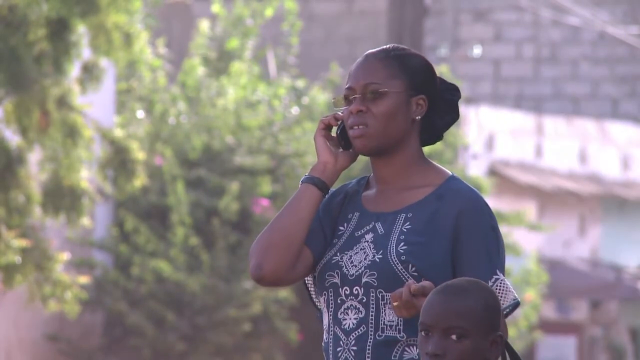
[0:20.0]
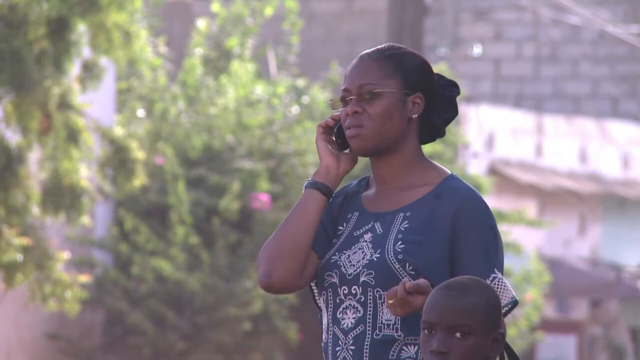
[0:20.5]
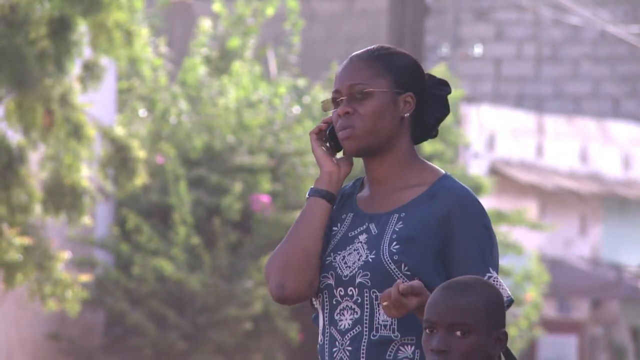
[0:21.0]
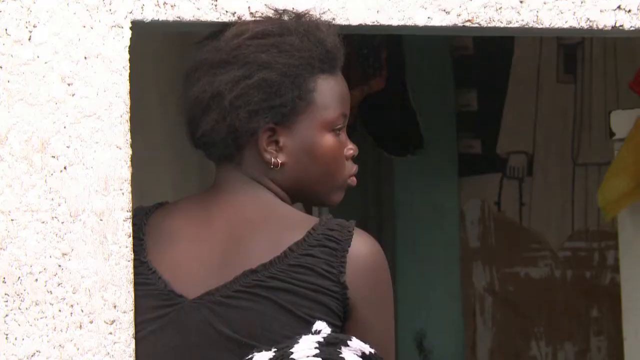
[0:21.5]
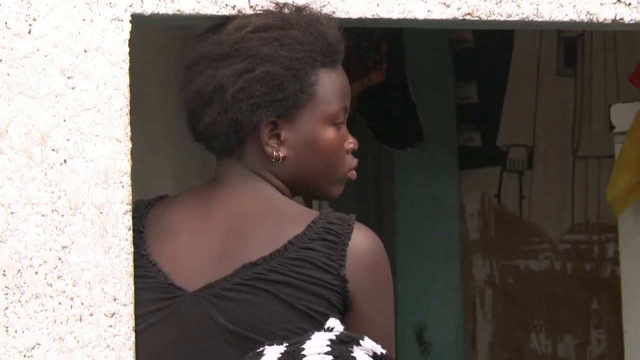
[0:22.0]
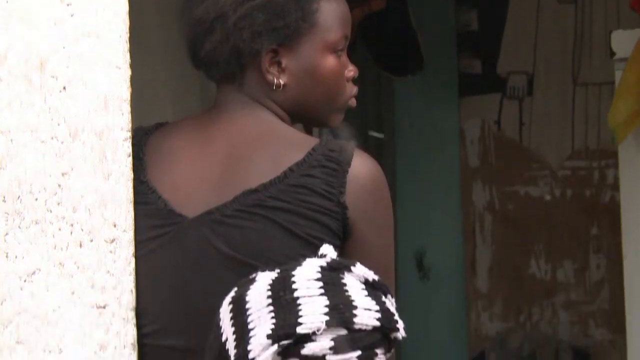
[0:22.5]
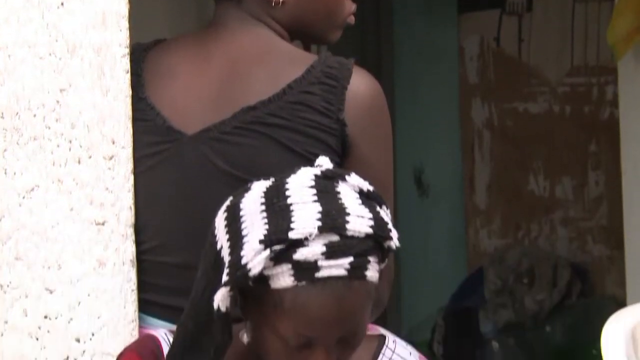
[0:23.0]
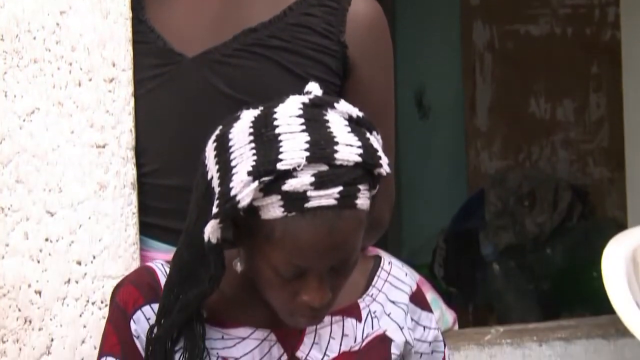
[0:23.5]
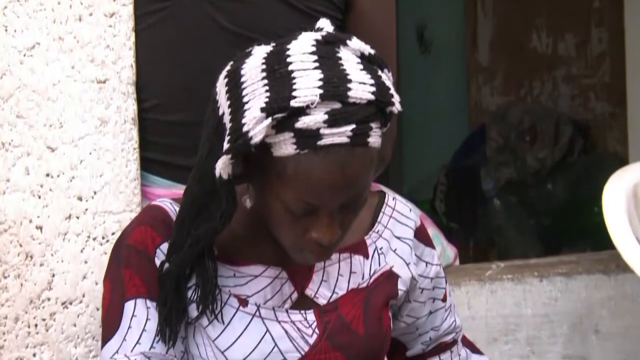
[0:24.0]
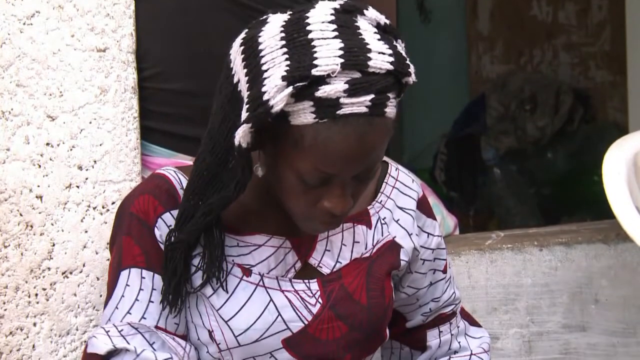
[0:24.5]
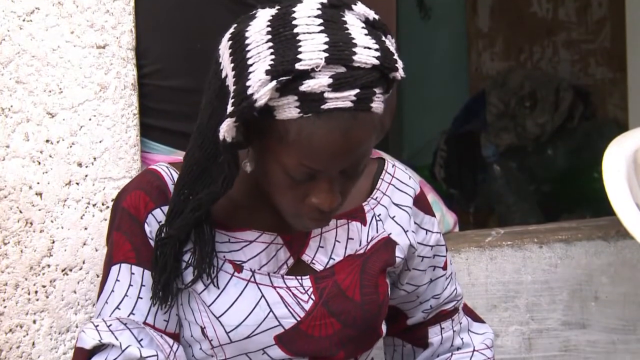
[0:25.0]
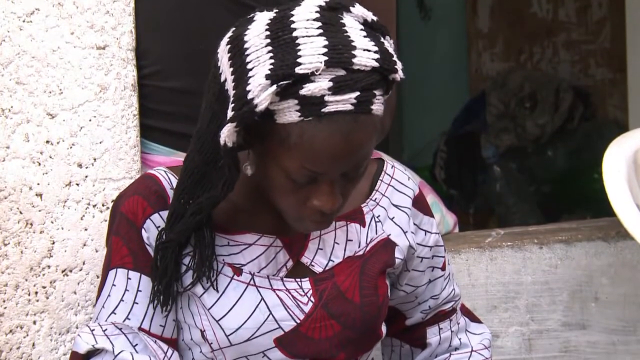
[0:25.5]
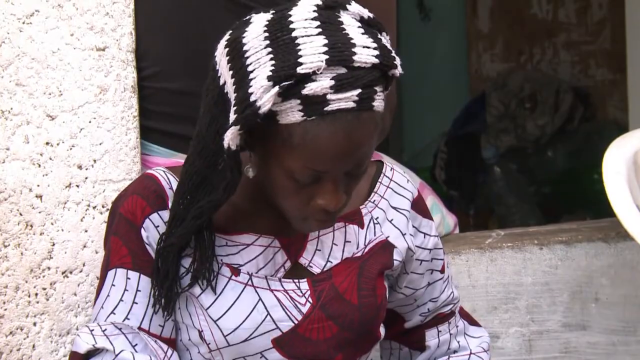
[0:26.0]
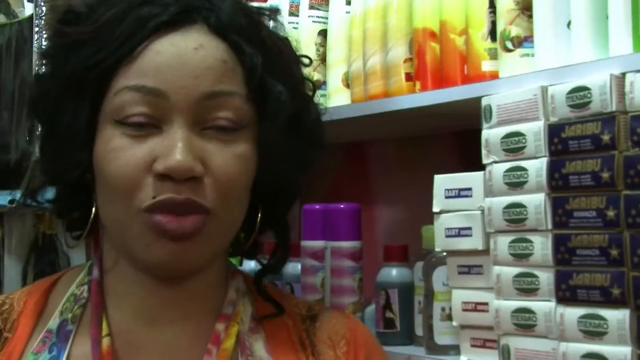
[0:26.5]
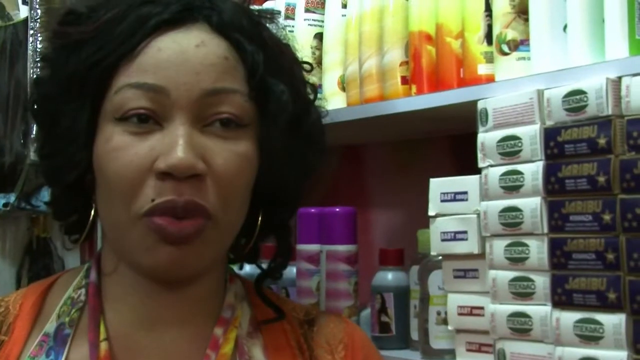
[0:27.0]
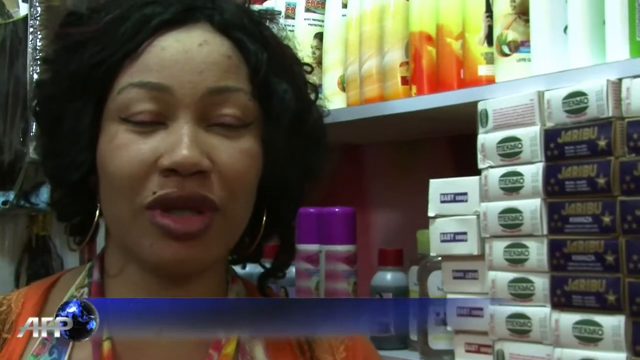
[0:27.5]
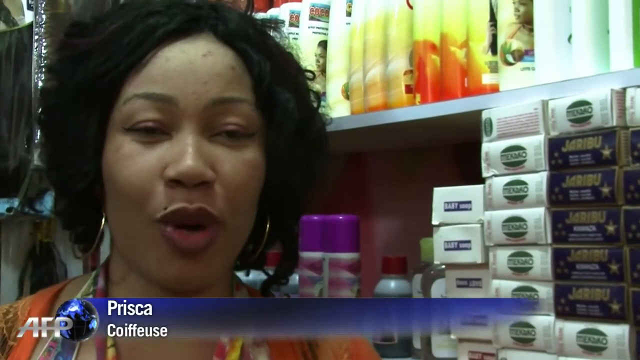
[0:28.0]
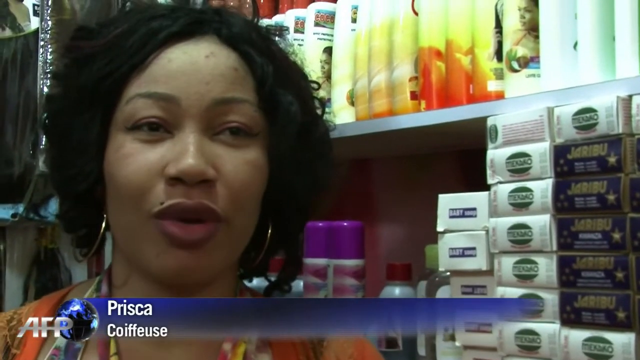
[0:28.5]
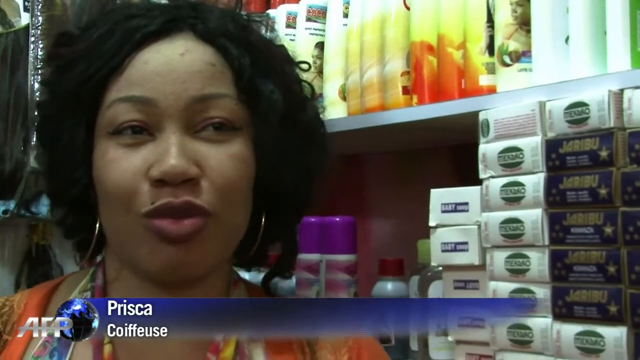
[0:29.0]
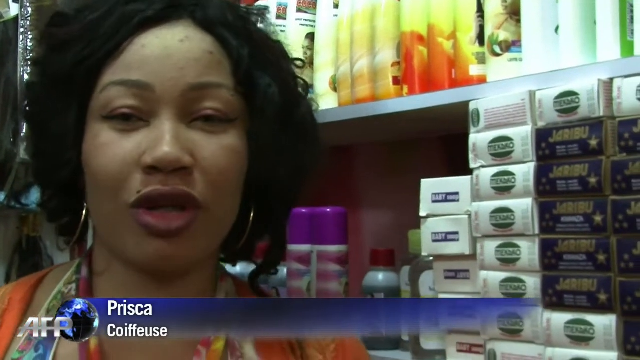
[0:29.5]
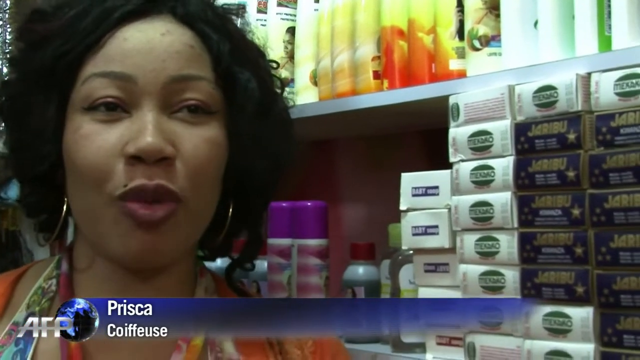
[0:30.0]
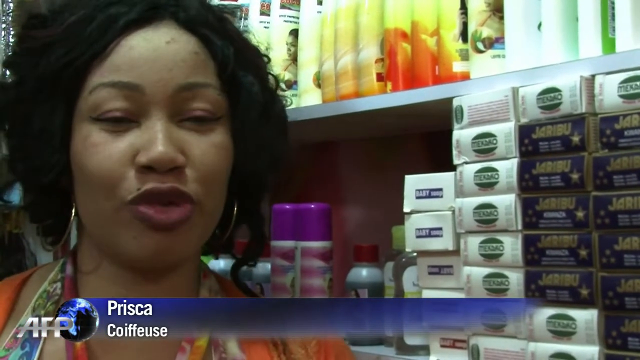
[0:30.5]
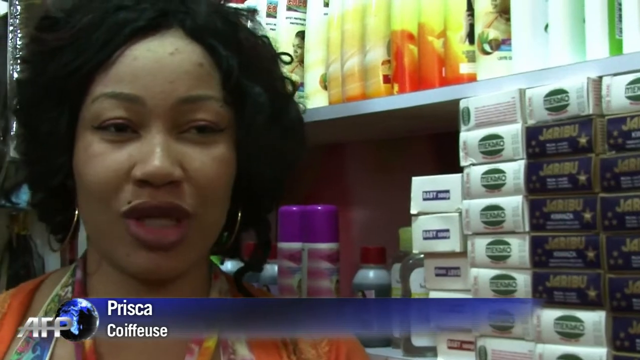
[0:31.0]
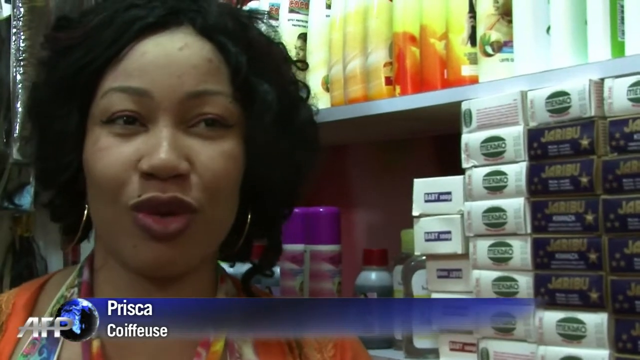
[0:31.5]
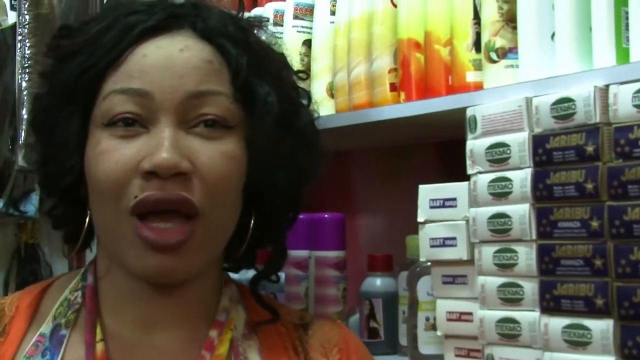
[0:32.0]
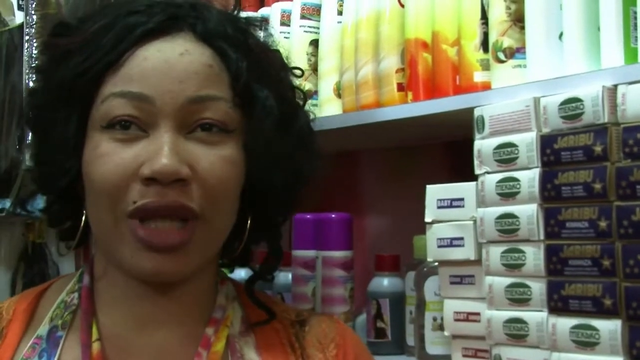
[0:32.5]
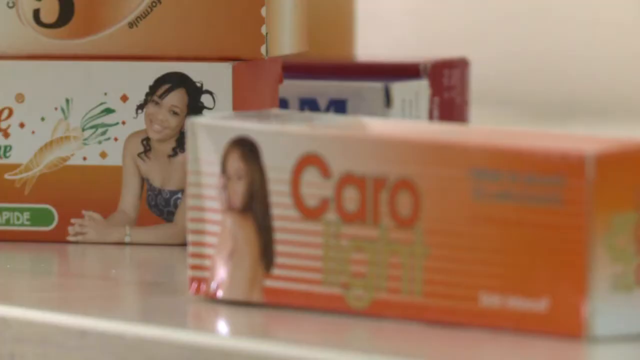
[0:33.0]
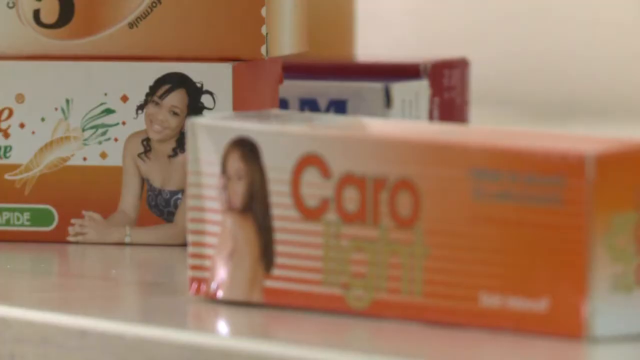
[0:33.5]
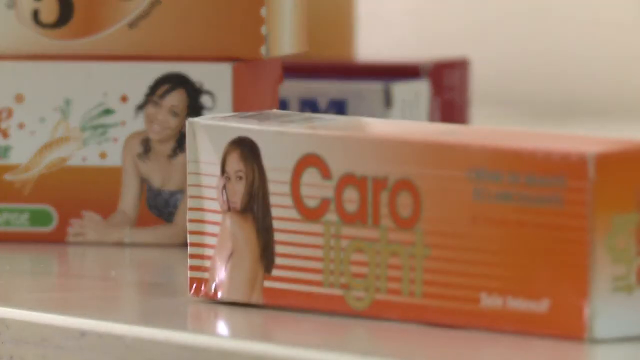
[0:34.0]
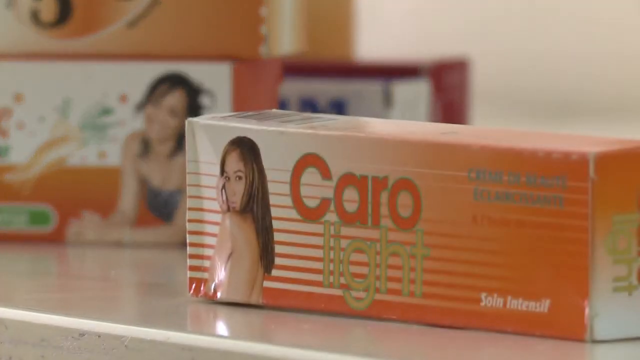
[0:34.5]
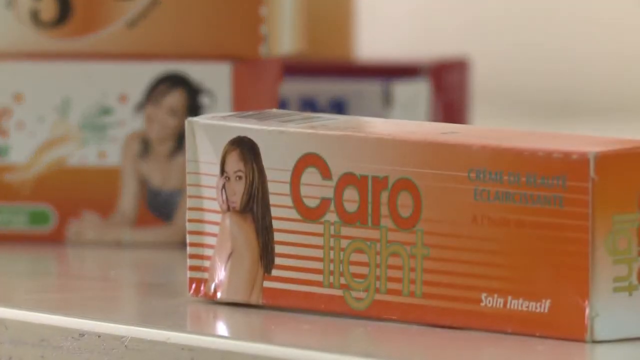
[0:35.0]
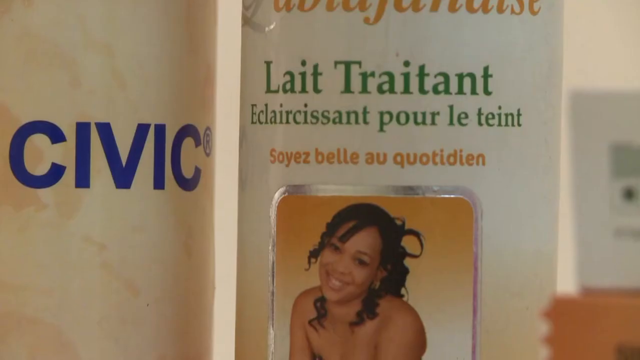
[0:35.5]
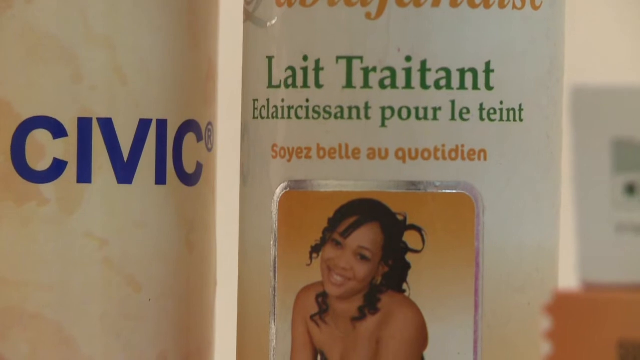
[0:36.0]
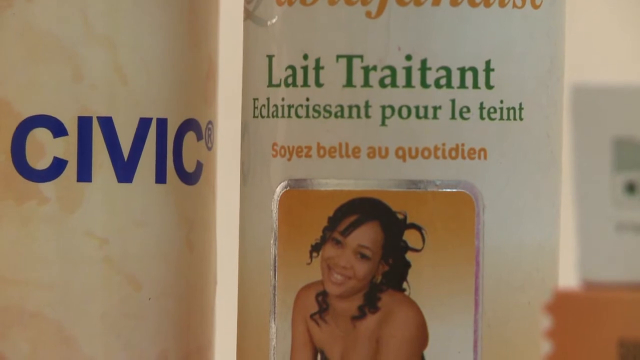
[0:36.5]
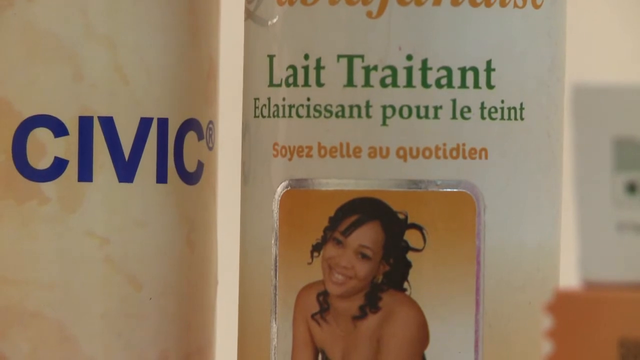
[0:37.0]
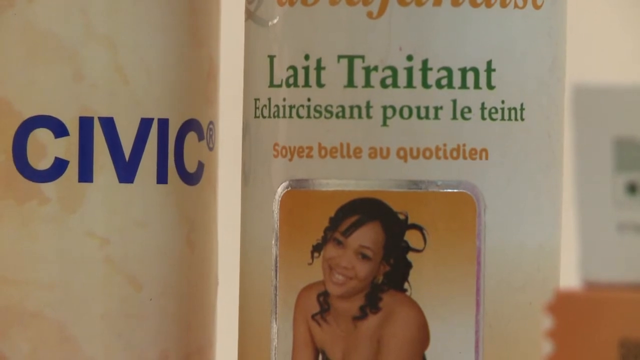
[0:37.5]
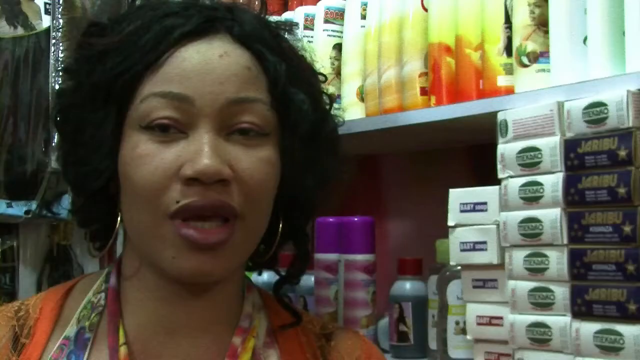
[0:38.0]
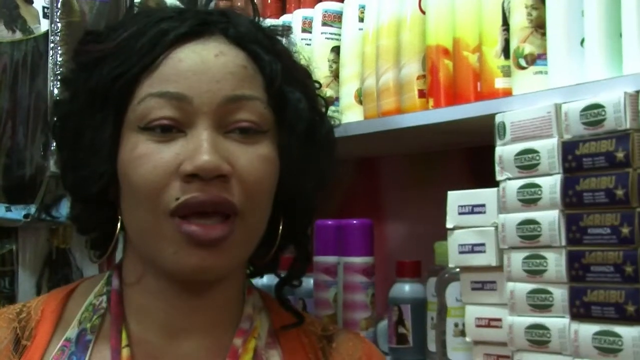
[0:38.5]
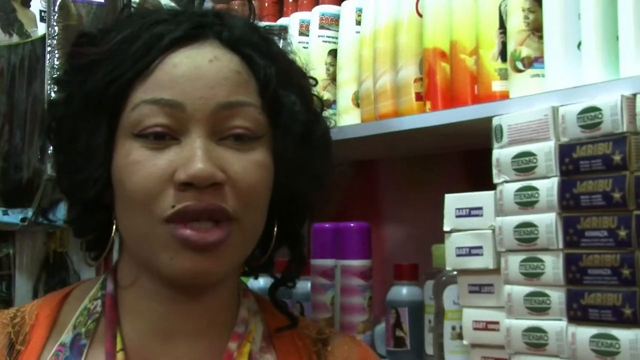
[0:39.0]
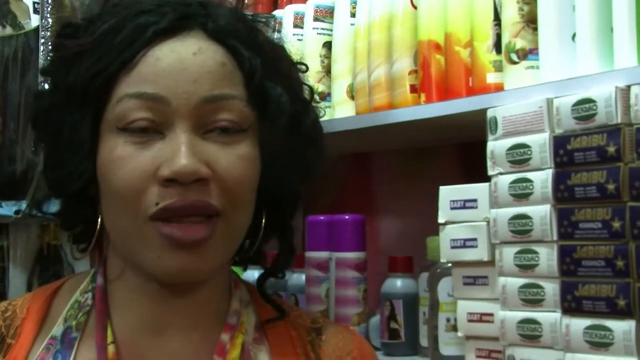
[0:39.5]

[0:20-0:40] A Black woman is on a phone, and some Black women in another country are working on something by the side of the road. A Black woman named Priscilla is being interviewed. Different skincare products with pictures of women on them are shown; the women pictured are very dark-skinned and wear very colorful outfits. The interviewed woman appears to be in a store, with different products arranged on shelving behind her in the form of boxes and containers with caps. The woman holding the phone is talking, her mouth moving and her head moving a little as she talks; she is outside by a tree.